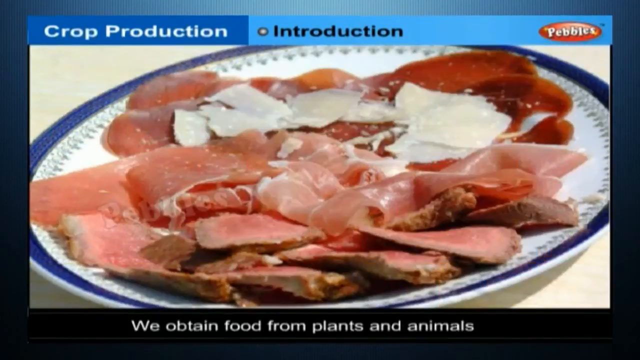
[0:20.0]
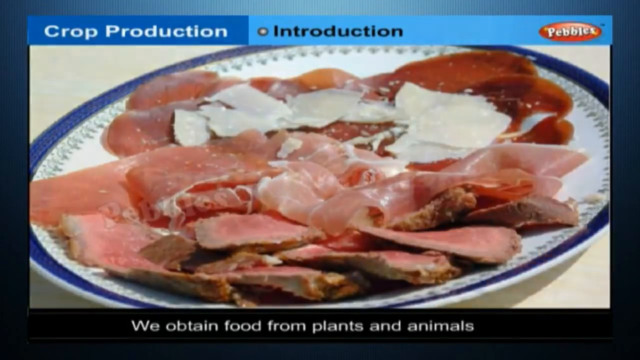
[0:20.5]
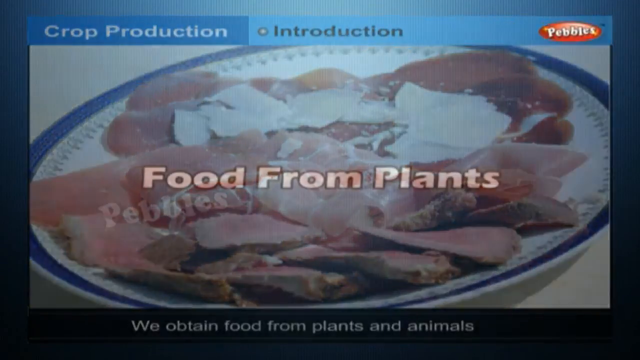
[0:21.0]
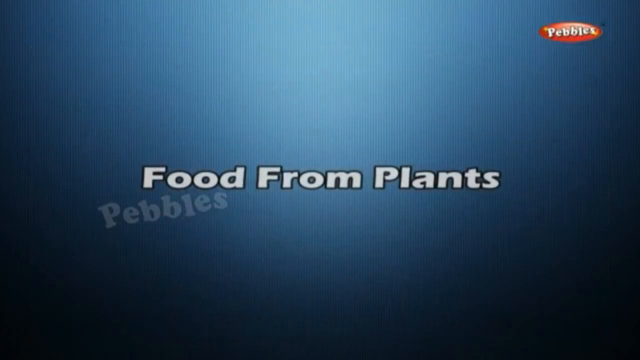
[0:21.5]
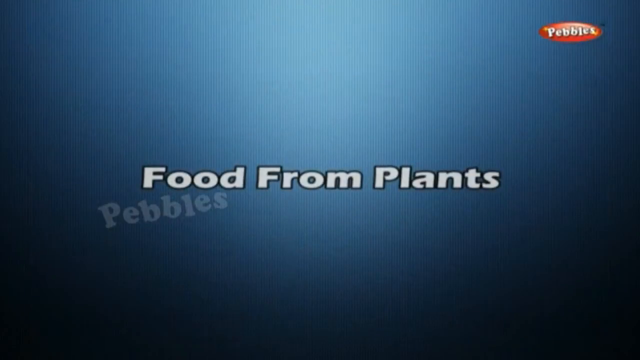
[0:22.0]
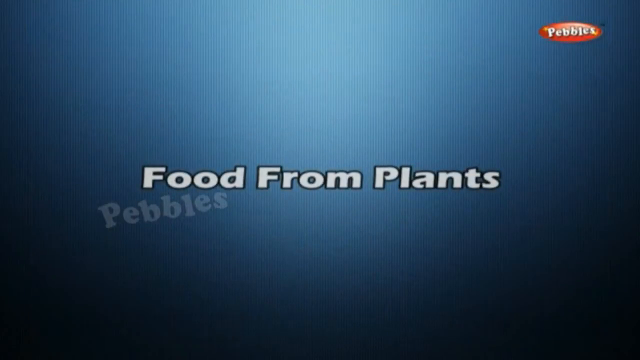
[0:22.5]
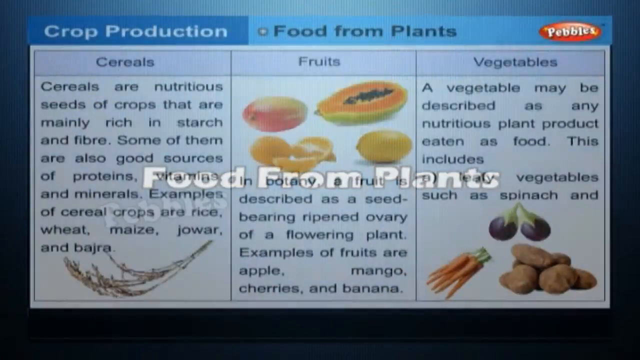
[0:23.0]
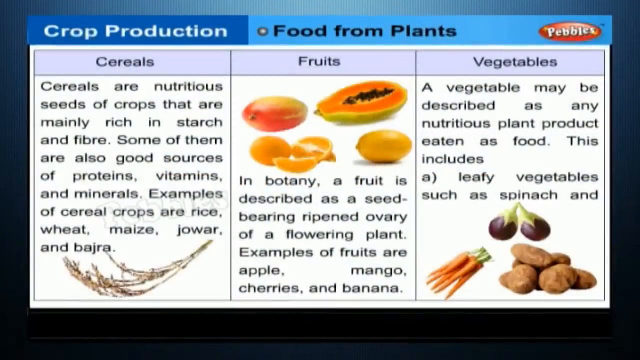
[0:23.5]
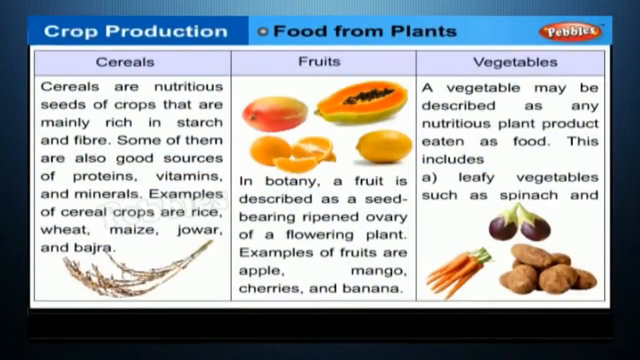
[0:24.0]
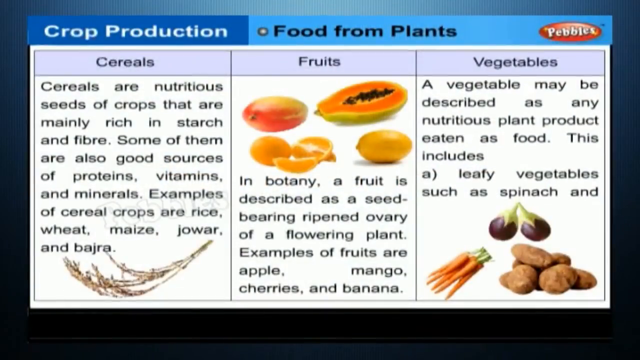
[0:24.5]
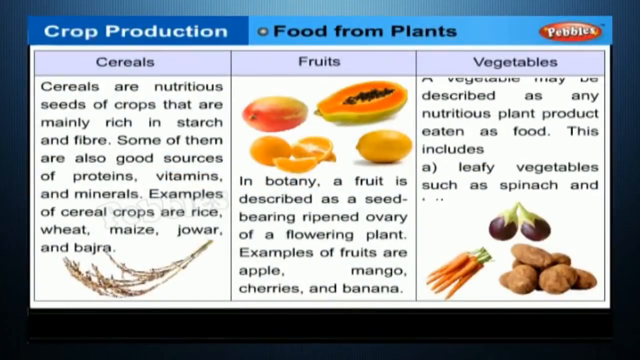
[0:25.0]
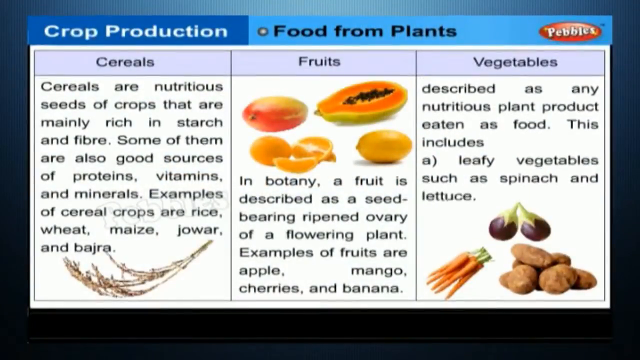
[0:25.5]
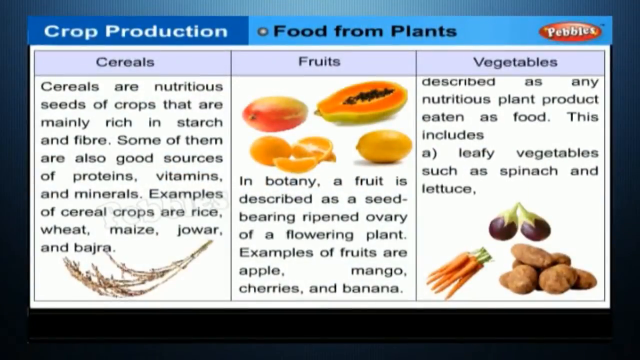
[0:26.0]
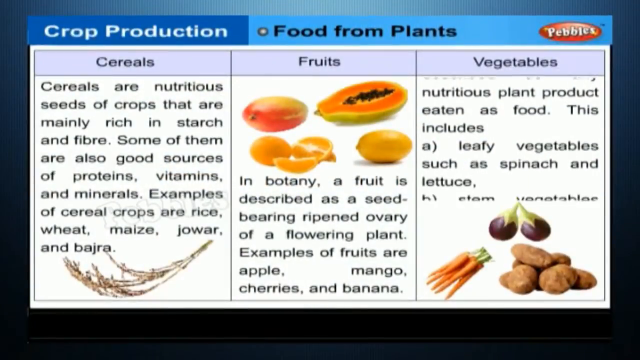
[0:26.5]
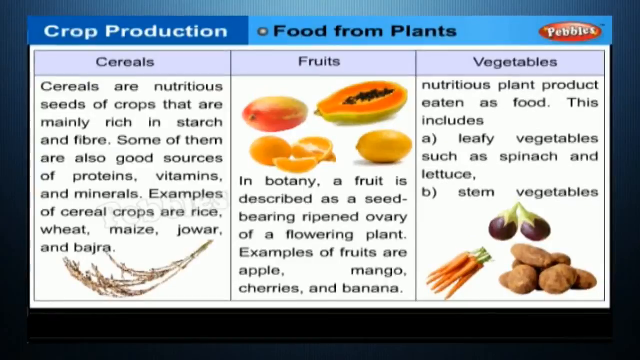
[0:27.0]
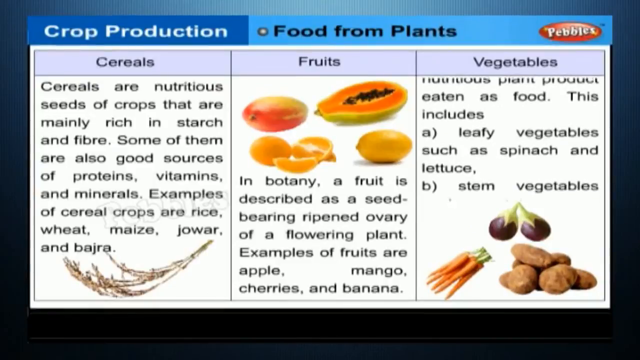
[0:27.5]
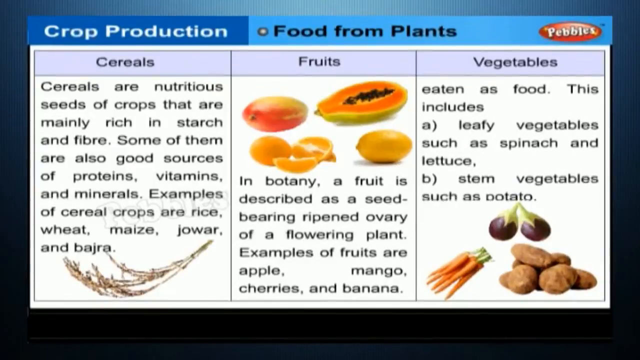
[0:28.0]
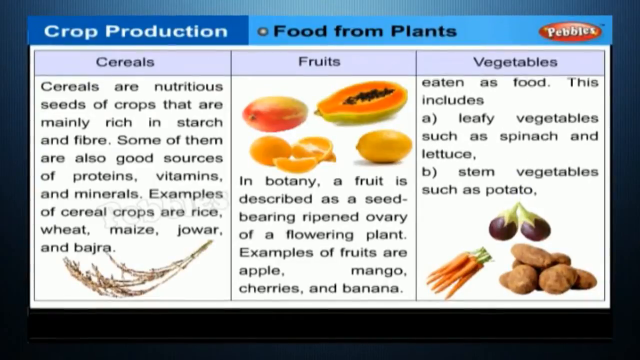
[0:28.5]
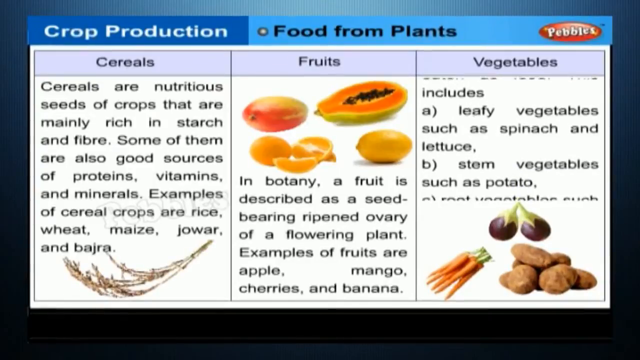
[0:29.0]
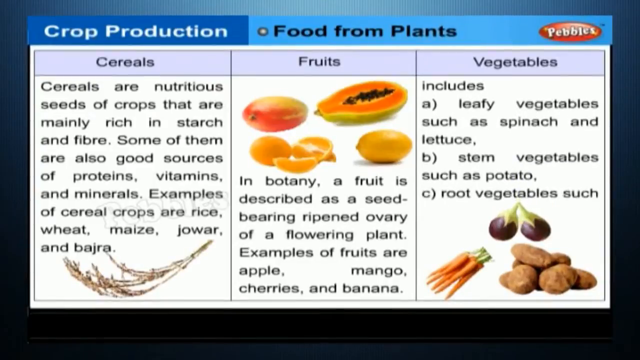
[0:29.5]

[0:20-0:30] A white plate with a blue outline holds a dish of cured meats and what looks like parmesan cheese slices. On this crop production information page from Pebbles, the text at the bottom of the screen reads "We obtain food from plants and animals." The crop production page then changes to food from plants, with three headings at the top of the screen. The first column is cereals and reads "Cereals are nutritious seeds of crops that are mainly rich in starch and fibre. Some of them are also good sources of protein, vitamins and minerals. Examples of cereal crops are rice, wheat, maize, jowar and bajra." The second column is fruits, with images of papaya, orange, lemon and mango, and reads "In botany a fruit is described as a seed bearing ripened ovary of a flowering plant. Examples of fruits are apple, mango, cherries and banana." The third column is vegetables, with two aubergines, a bunch of carrots and a pile of potatoes, and text beginning "A vegetable may be described as any nutritious plant product eaten as food." It goes on to list leafy vegetables such as spinach and lettuce, stem vegetables such as potato, and root vegetables.